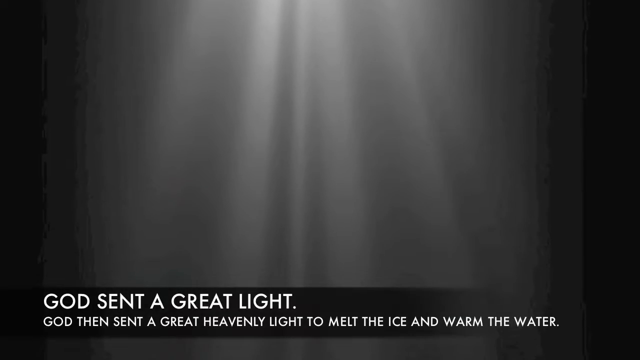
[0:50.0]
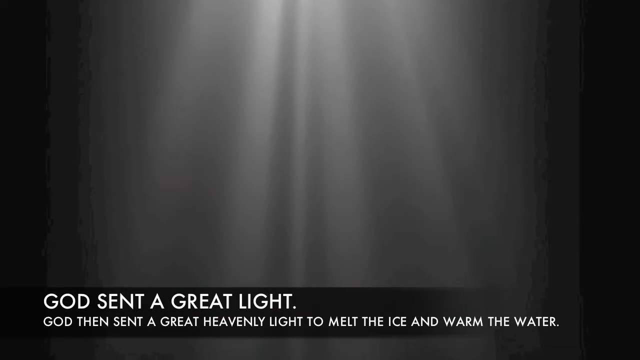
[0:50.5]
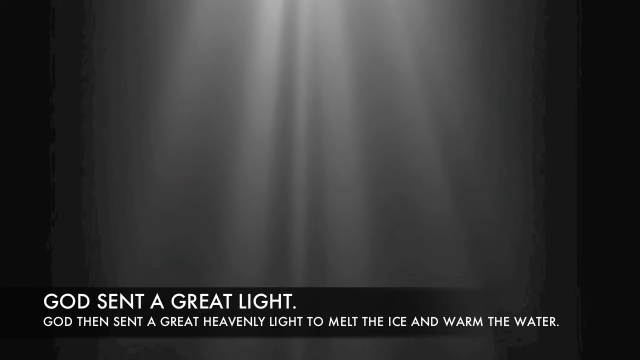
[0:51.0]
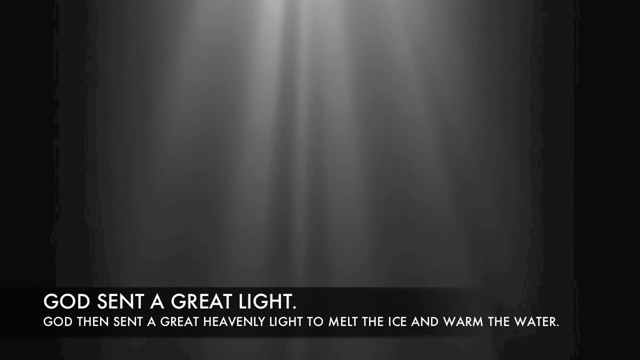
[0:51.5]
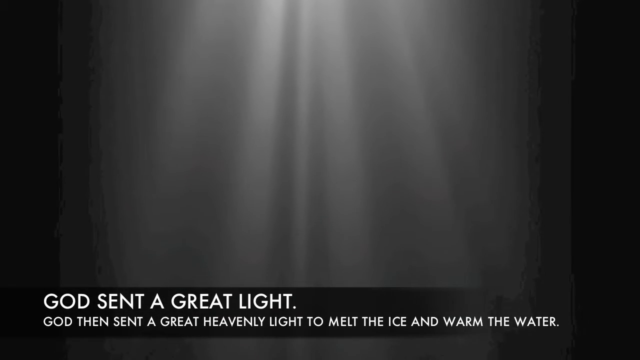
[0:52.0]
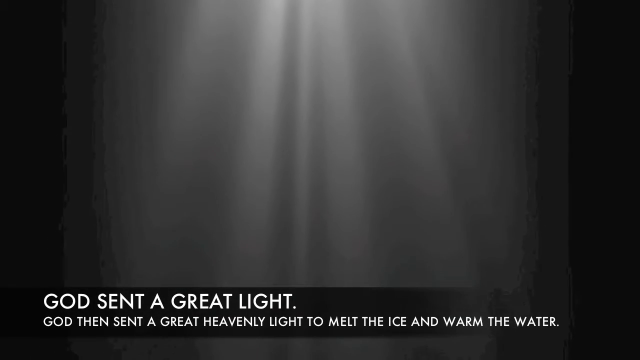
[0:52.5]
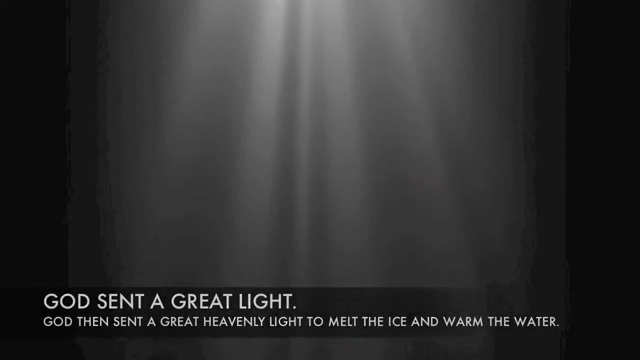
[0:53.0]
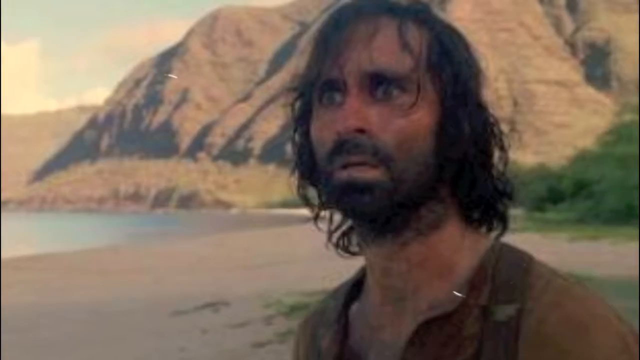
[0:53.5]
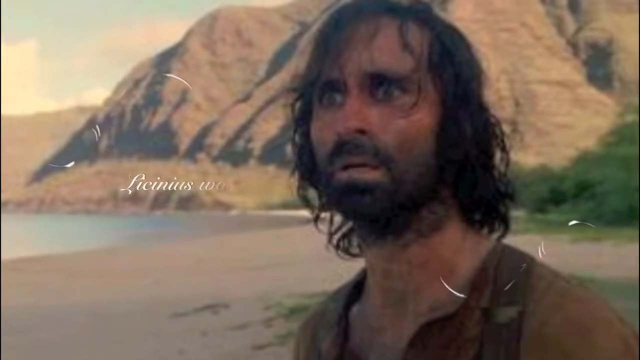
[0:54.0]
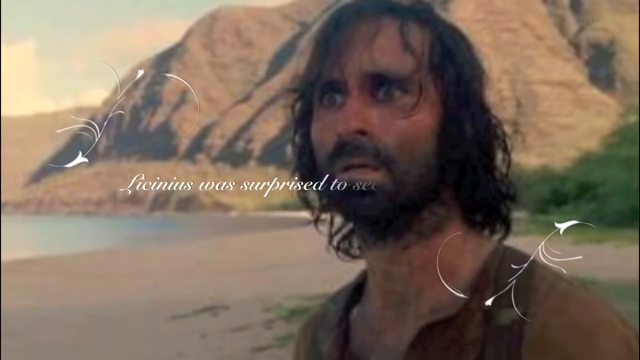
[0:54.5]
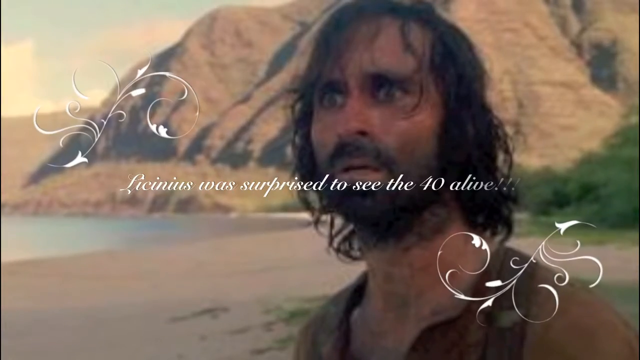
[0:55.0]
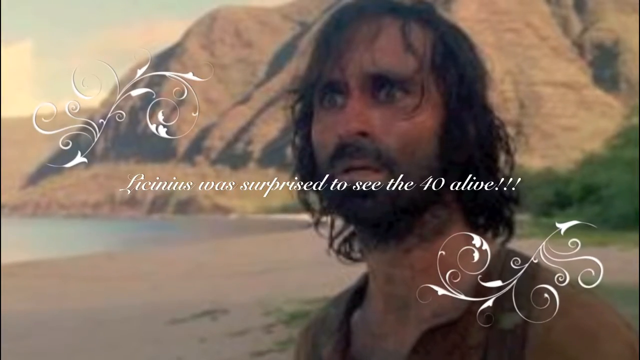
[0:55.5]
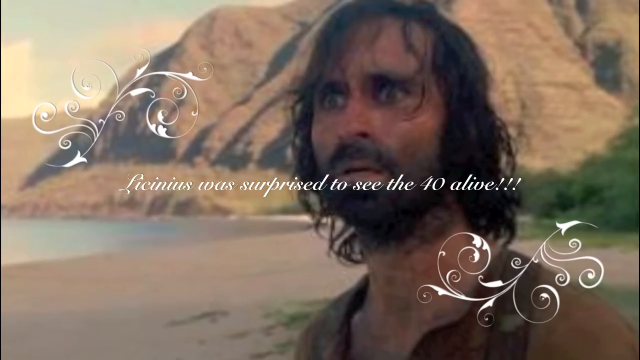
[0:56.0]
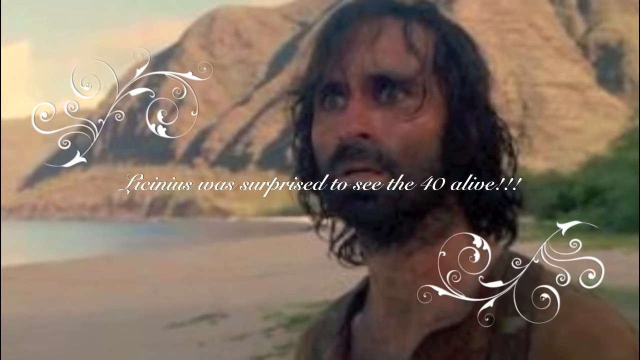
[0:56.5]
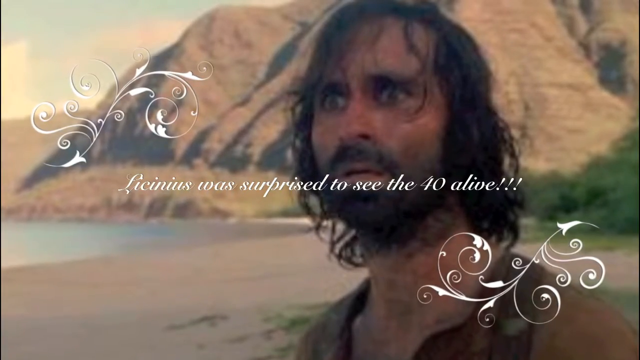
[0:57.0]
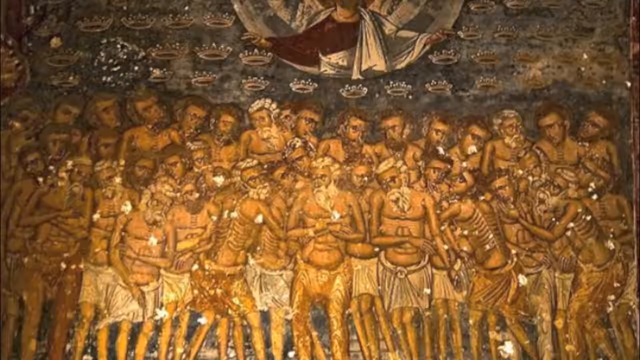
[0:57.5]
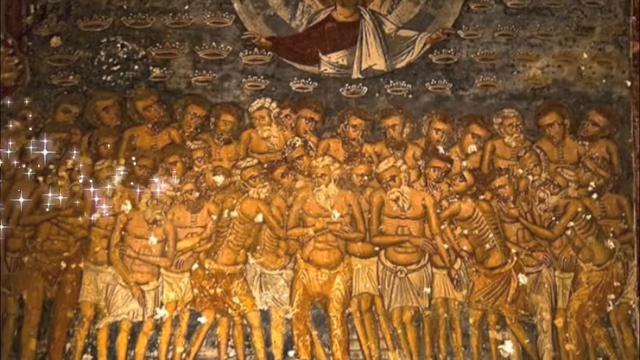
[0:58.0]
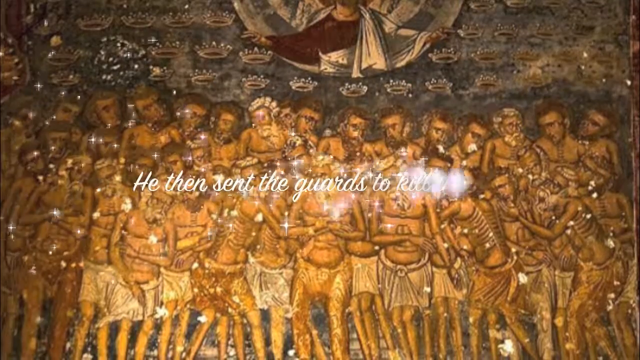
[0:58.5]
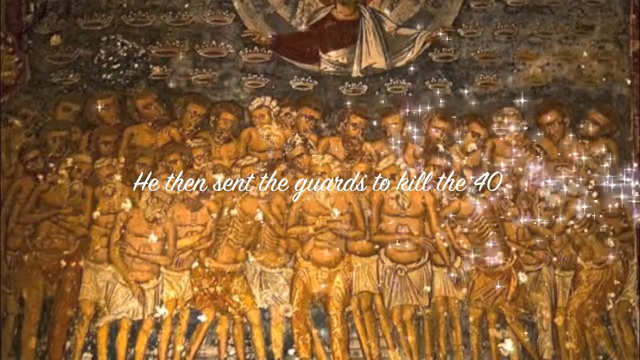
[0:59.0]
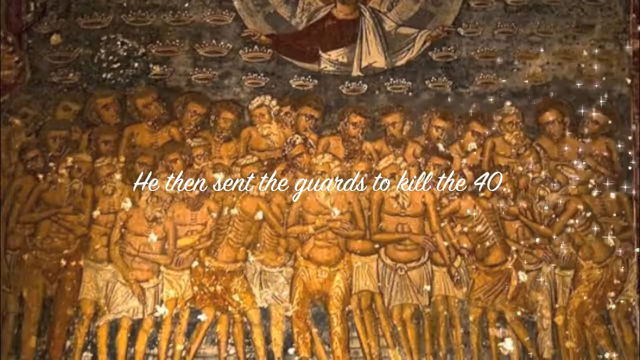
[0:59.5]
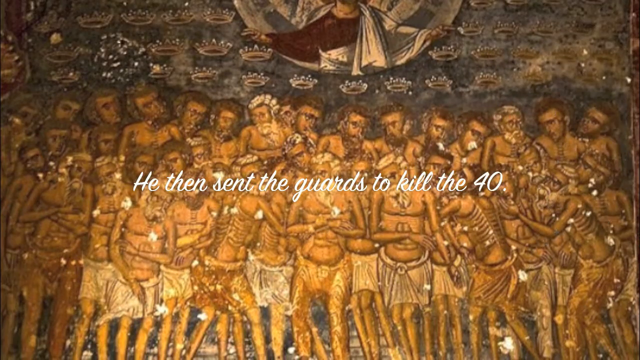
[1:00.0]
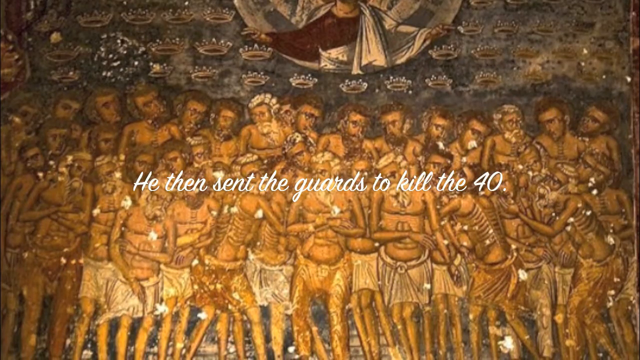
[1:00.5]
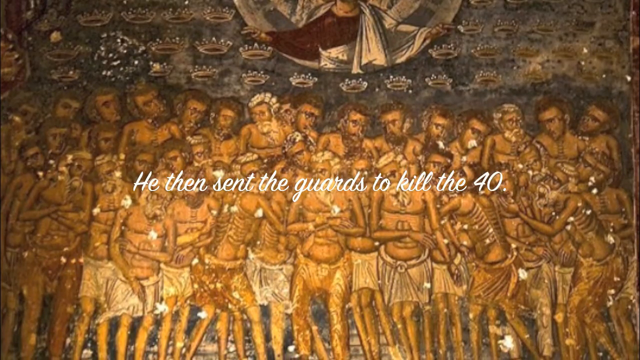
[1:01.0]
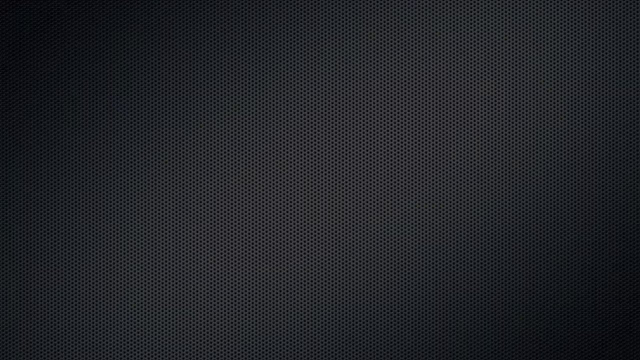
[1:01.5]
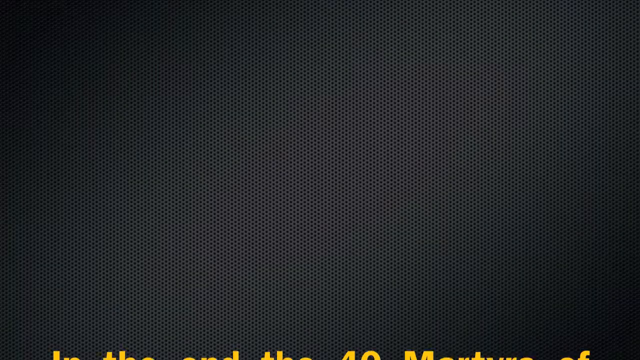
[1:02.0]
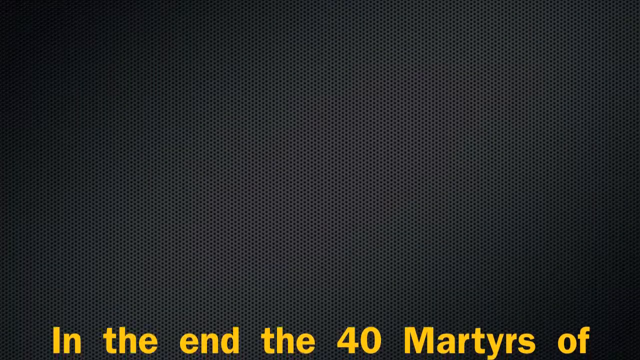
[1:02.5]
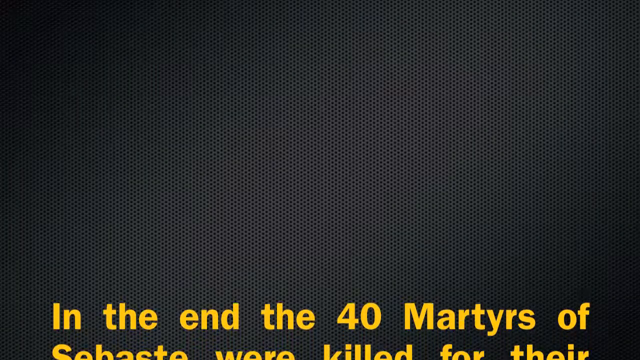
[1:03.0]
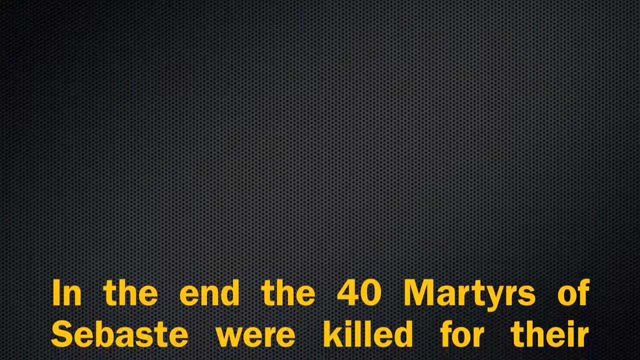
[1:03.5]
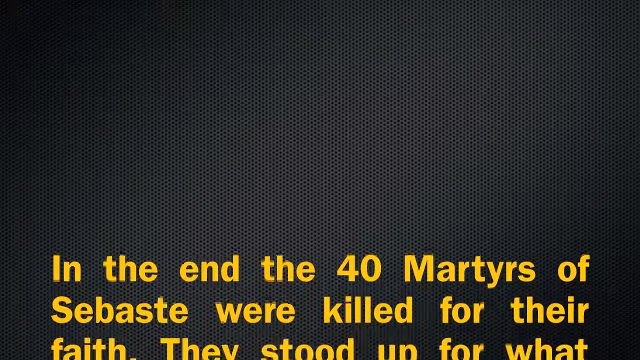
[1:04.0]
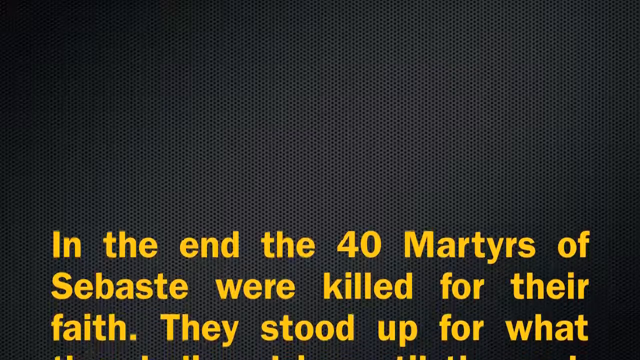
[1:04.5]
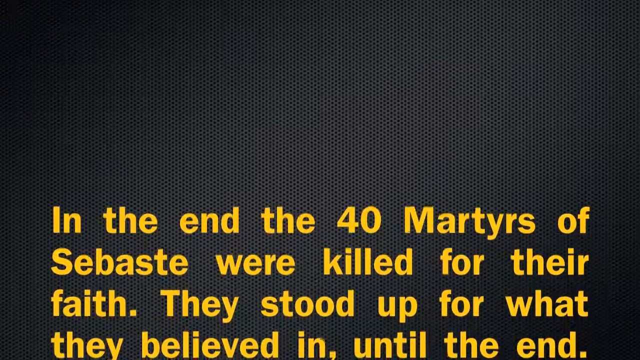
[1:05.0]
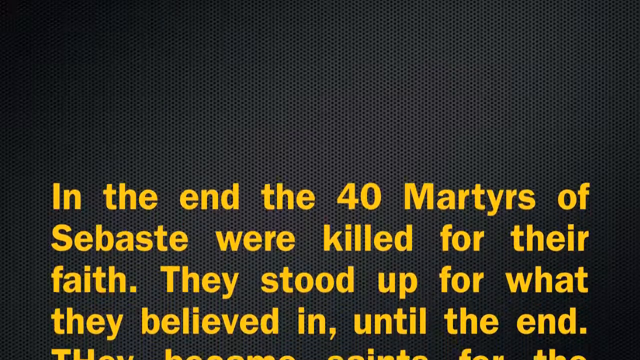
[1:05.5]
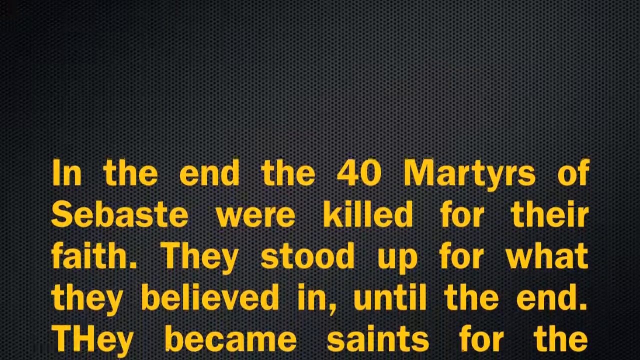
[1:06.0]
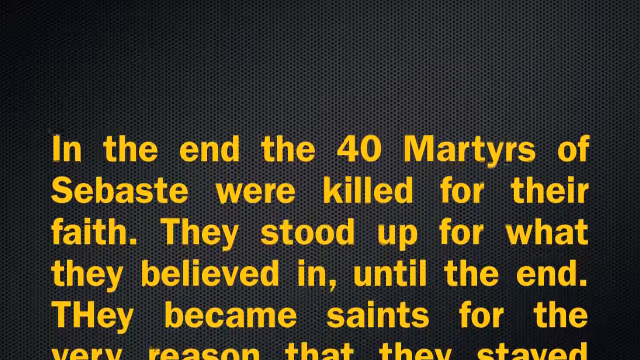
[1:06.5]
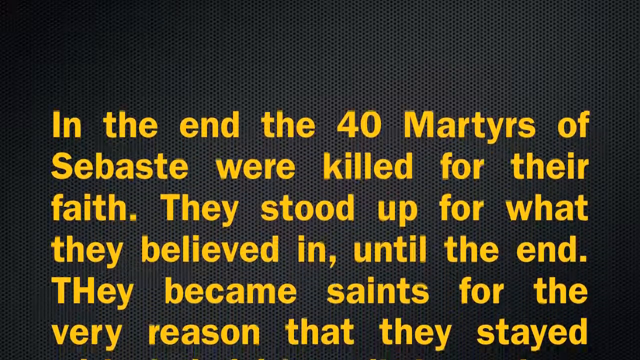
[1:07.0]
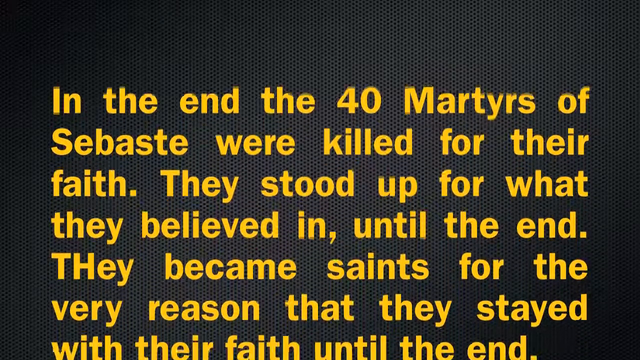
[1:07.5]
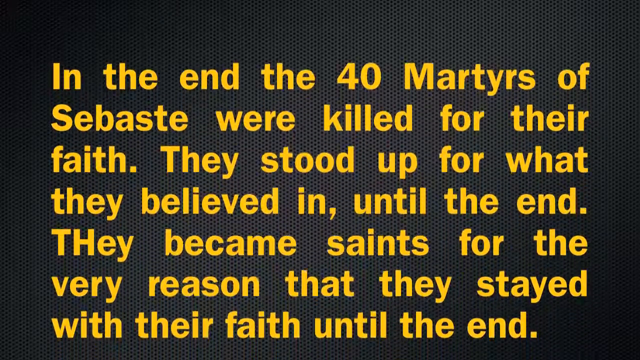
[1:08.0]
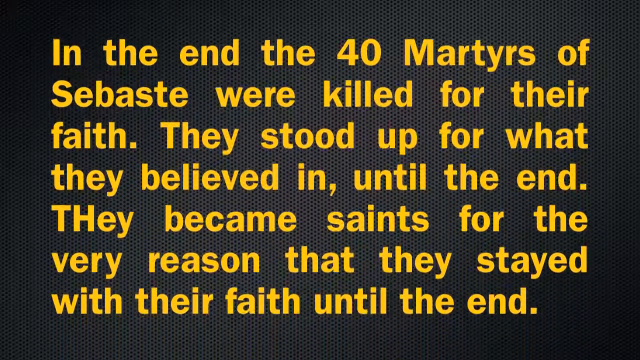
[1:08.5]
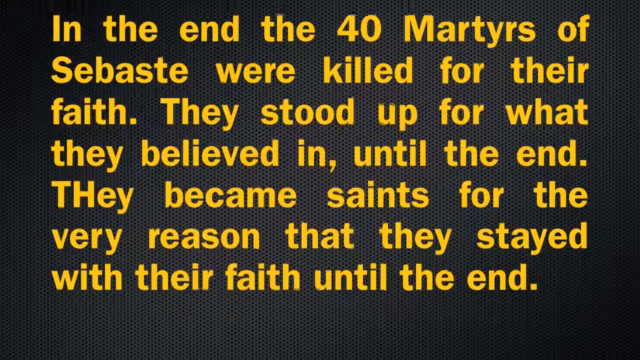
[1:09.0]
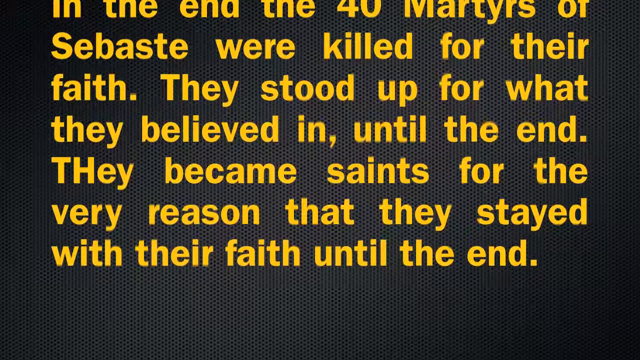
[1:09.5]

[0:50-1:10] Captions at the bottom, in a white font, say "God sent a great light. God then sent a great heavenly light to melt the ice and warm the water." The background looks light gray, with a shining light coming down from the top. Then a picture of a man with long hair and a lot of facial hair appears; he looks very worried and shocked. A caption in the middle says "Licinus was surprised to see the 40 alive," indicating the man is Licinus. Next comes a portrait, painting or sculpture of many shirtless men bundled together, all of whom look like they are in distress, with a caption in the middle saying "He then sent the guards to kill the 40." Captions in a yellow font then come up from the bottom and move upward, reading "In the end of the 40 martyrs of Sebaste were killed for their faith. They stood up for what they believed in until the end. They became the saints for the very reason that they stayed with their faith until the end."